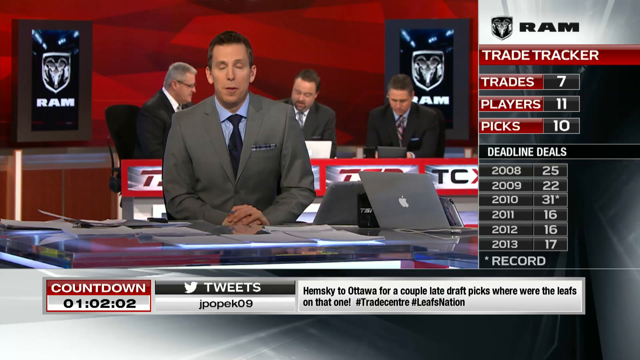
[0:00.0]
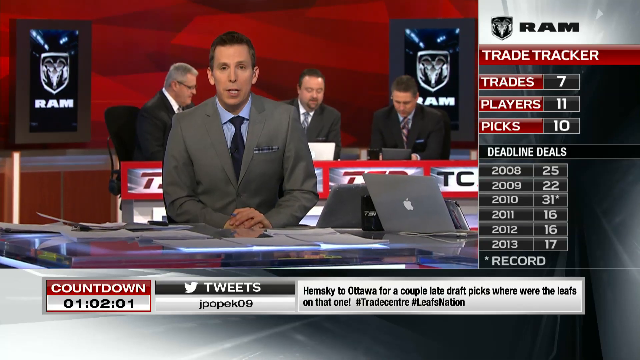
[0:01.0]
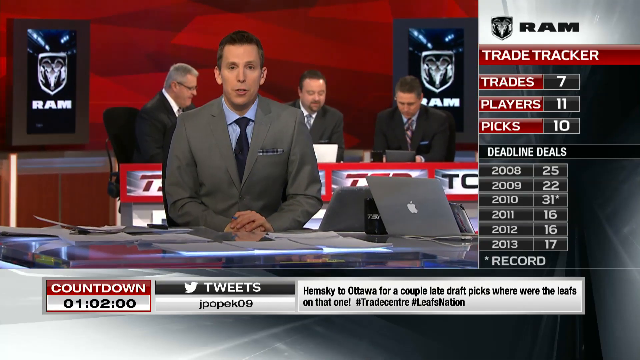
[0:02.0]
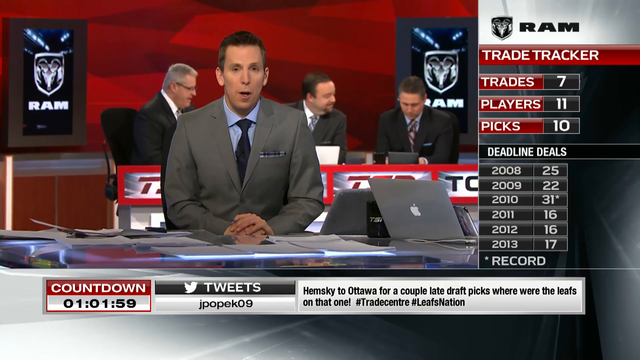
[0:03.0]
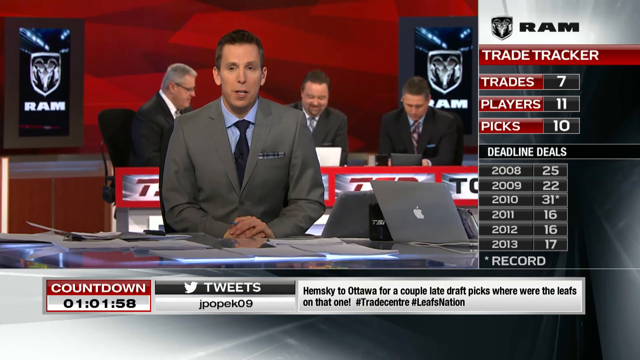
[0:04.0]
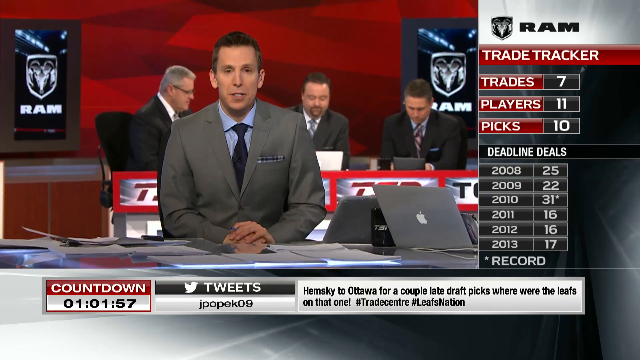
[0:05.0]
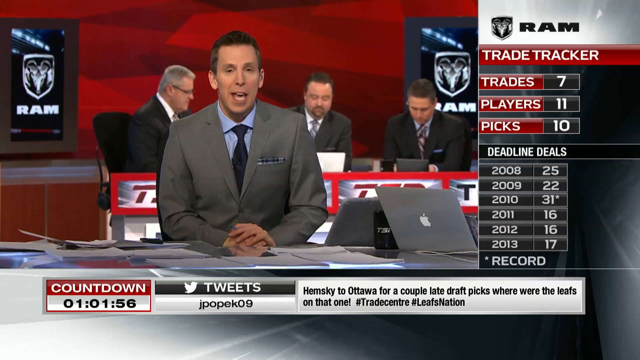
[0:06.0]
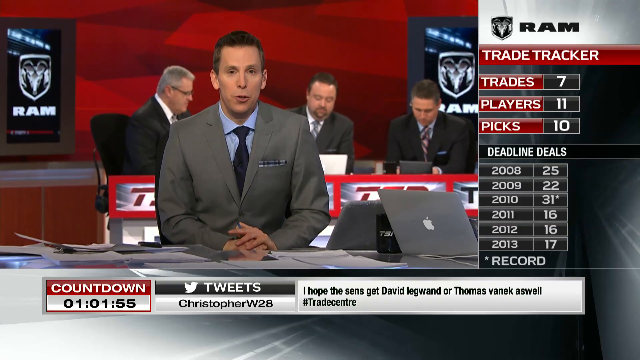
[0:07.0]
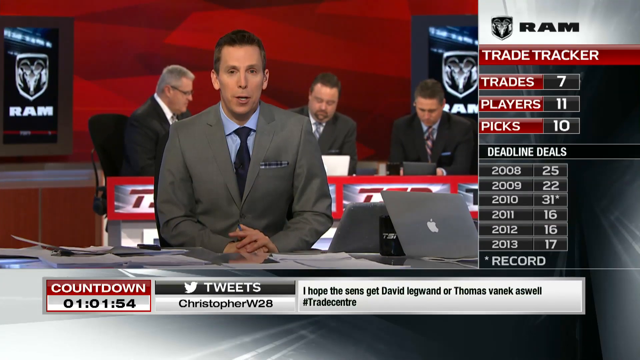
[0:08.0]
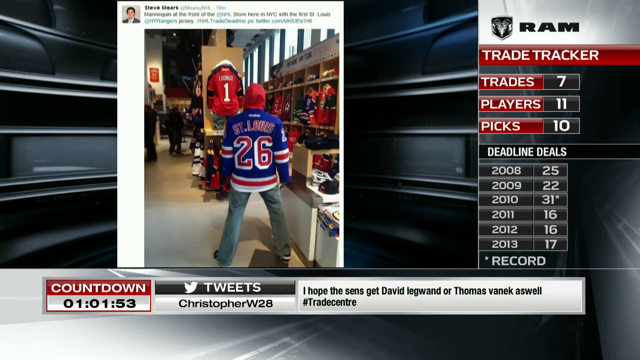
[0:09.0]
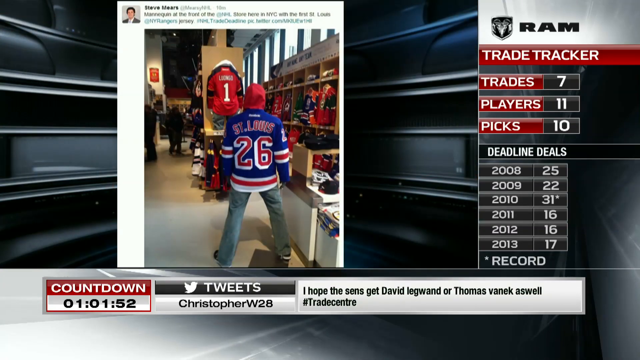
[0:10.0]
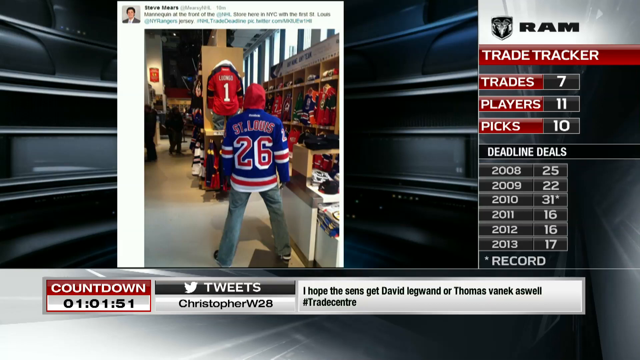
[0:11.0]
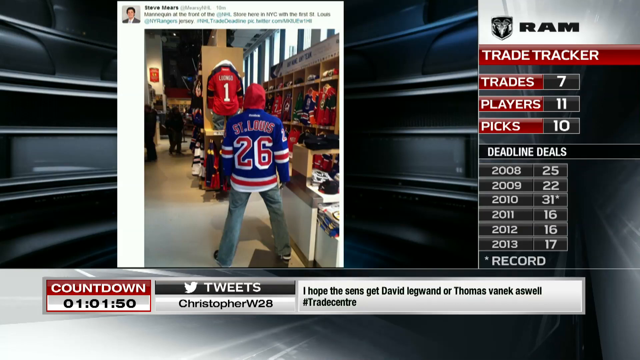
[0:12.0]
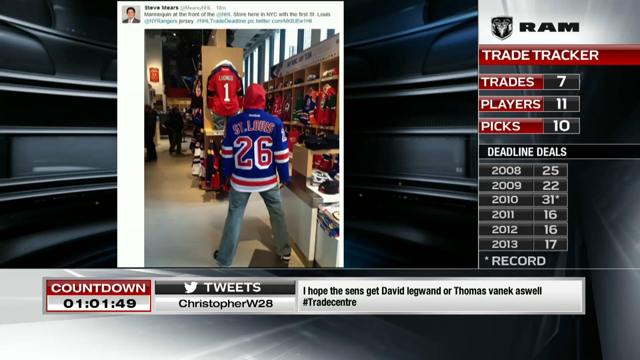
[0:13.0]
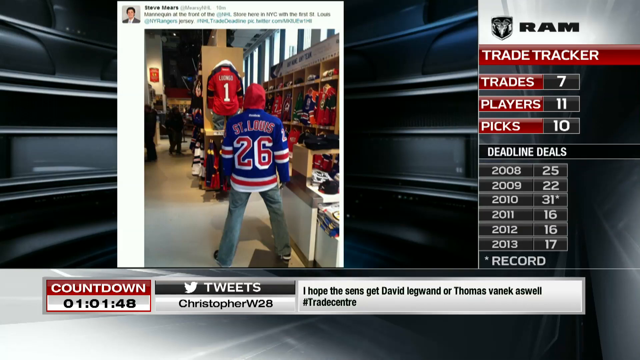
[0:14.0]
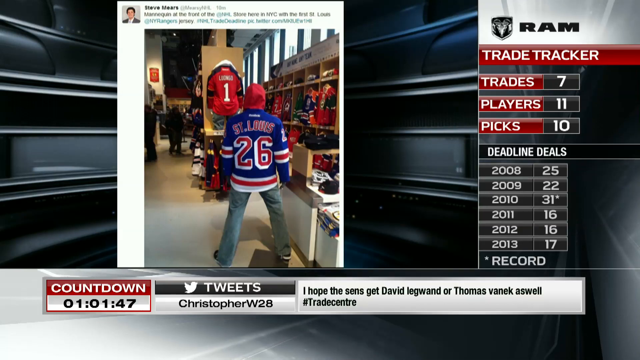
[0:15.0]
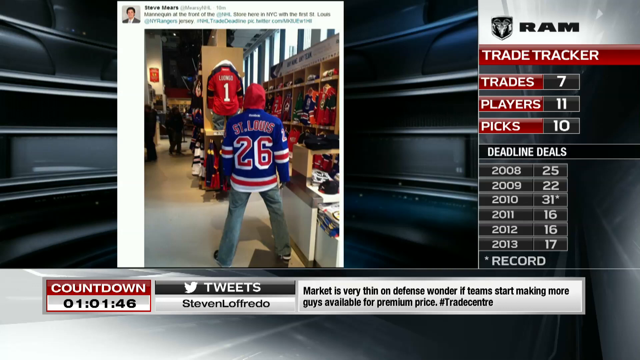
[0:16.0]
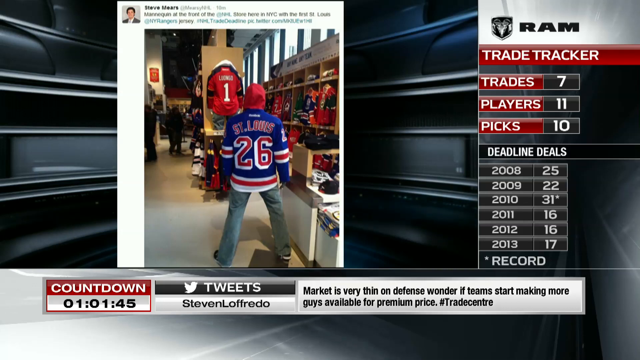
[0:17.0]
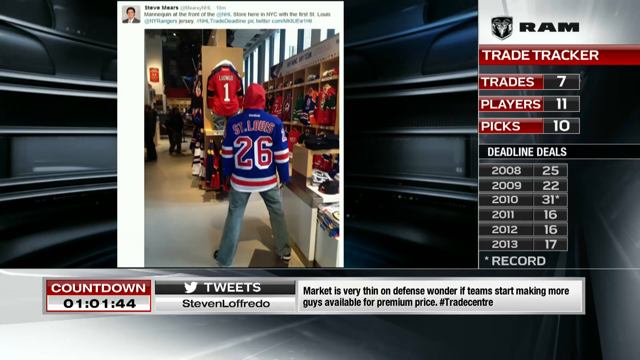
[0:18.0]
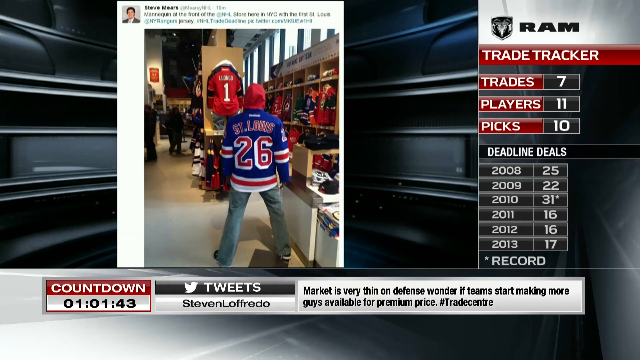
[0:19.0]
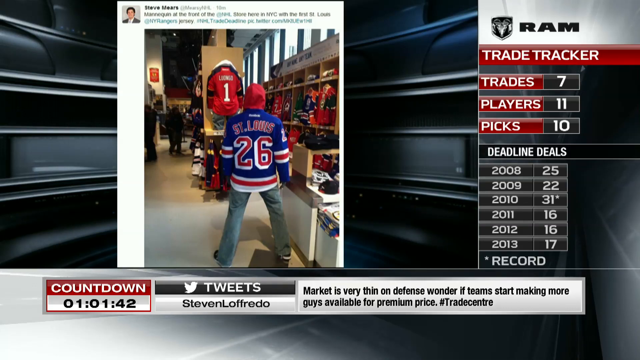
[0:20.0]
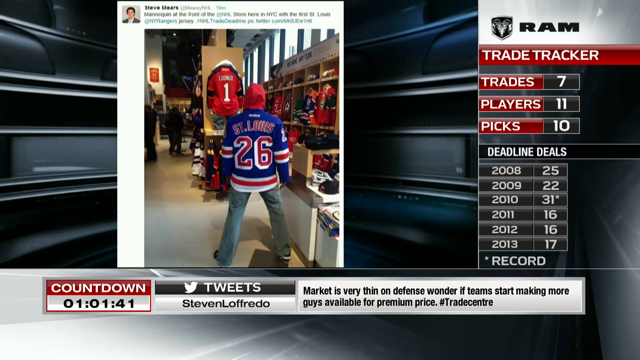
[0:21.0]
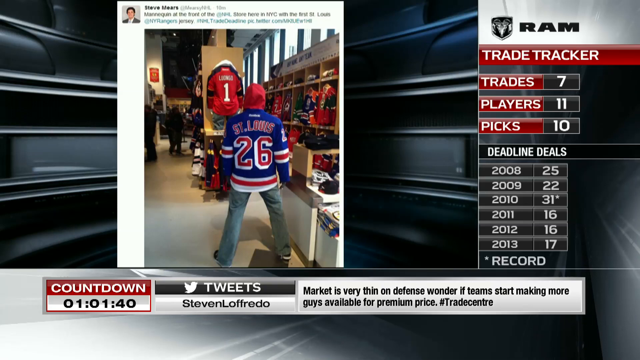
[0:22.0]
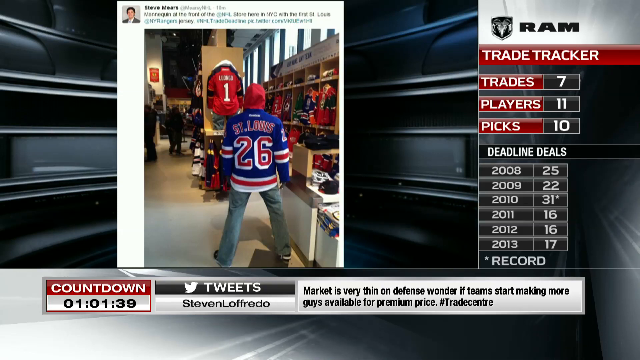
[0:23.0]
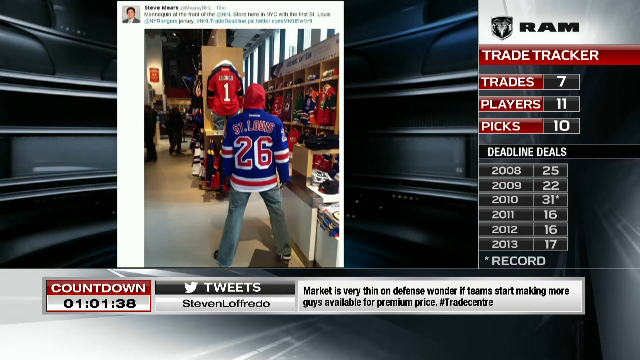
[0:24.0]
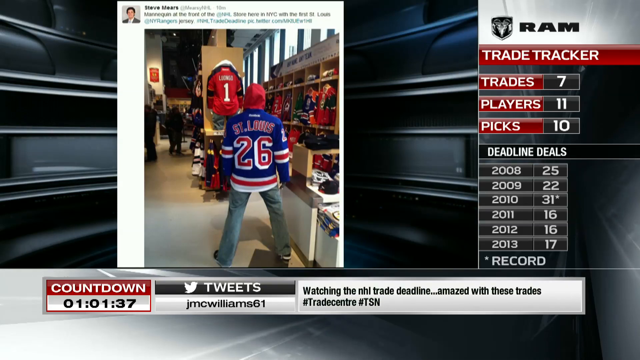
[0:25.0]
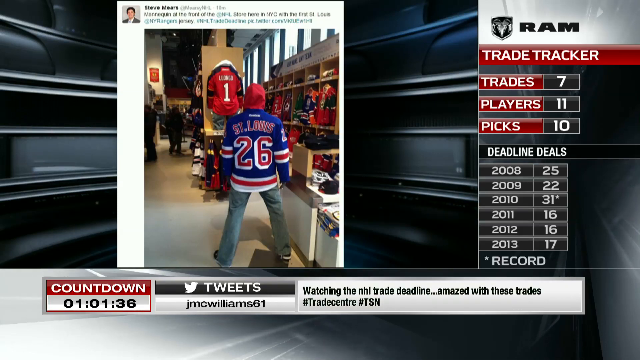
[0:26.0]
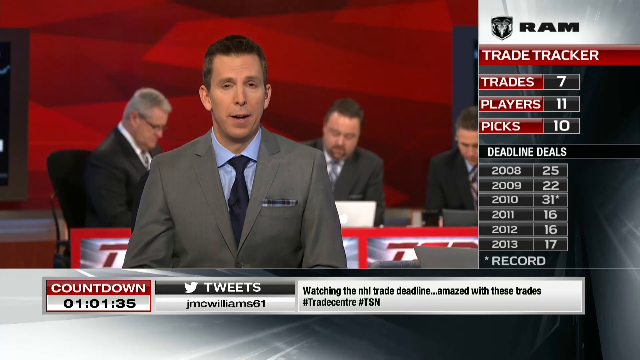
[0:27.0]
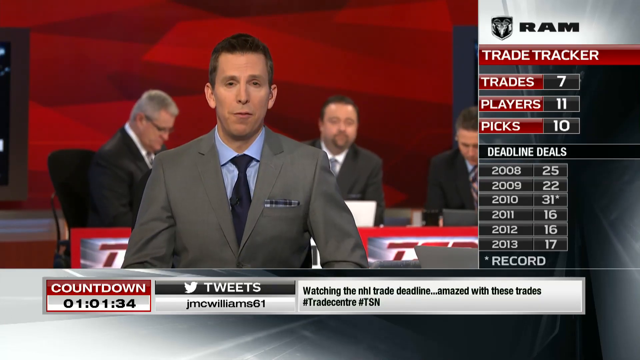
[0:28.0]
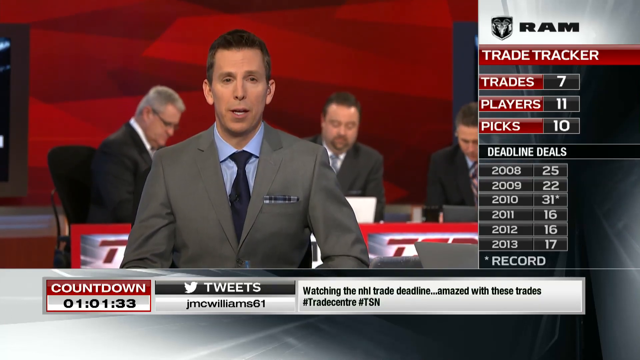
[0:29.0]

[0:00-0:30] A newscaster sits behind a desk, talking on camera. Behind him, three more men sit behind another desk, and on the wall behind them, on the right and the left, is the Ram logo, which would be Dodge Ram. On the right side of the screen the text reads "Trade Tracker," and below that "Trades 7, Players 11, Picks 10." The program appears to be a news show about trades, apparently for hockey. The next image shows the inside of a store, apparently a St. Louis Blues hockey team store, where a man stands wearing a St. Louis Blues jersey. A countdown shows one hour, two minutes and two seconds. A banner in the lower right, a tweet, reads "Hemsky to Ottawa for a couple late draft picks. Where were the Leafs on that one?" The newscast takes place during the NHL draft.